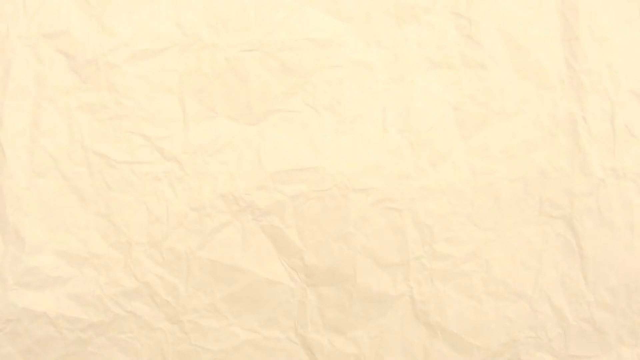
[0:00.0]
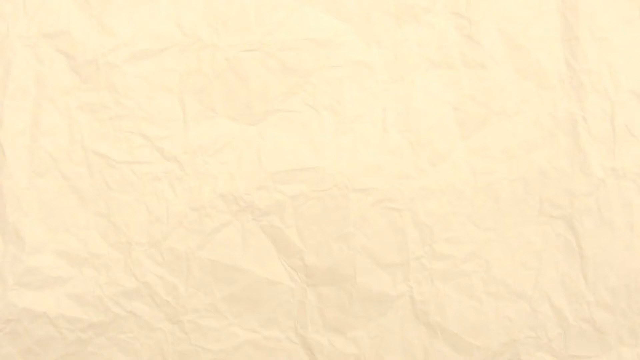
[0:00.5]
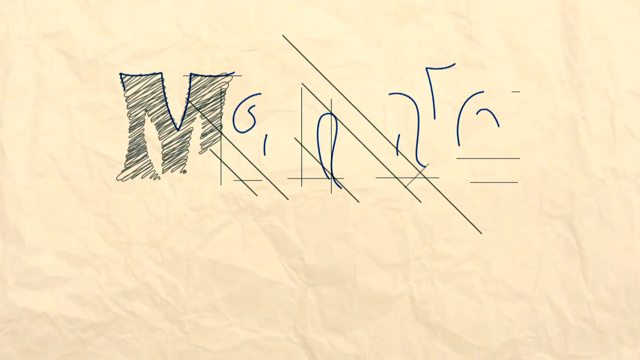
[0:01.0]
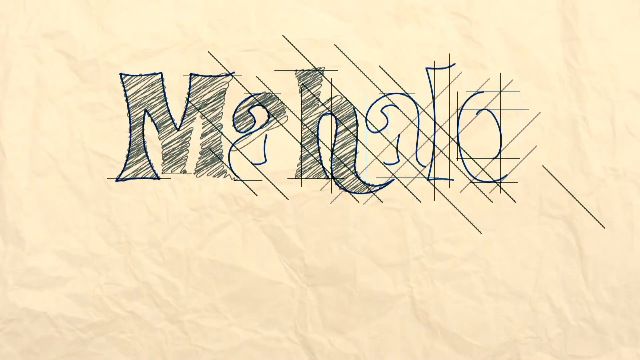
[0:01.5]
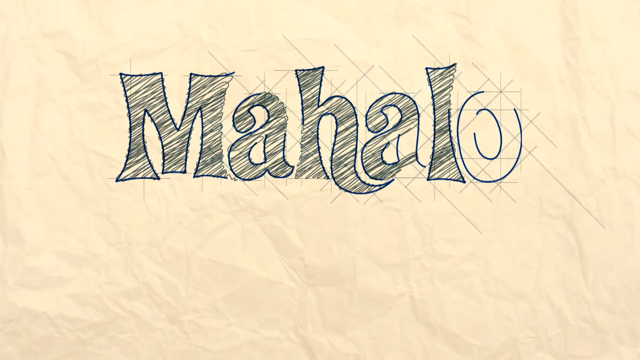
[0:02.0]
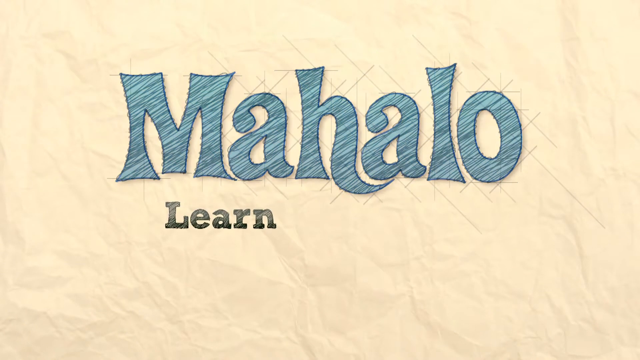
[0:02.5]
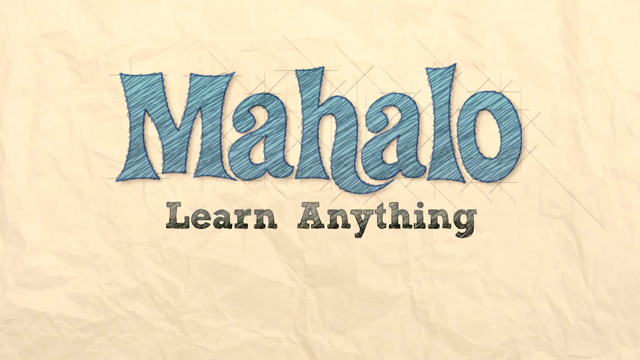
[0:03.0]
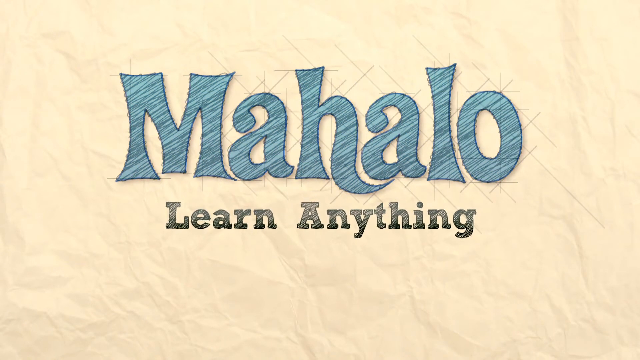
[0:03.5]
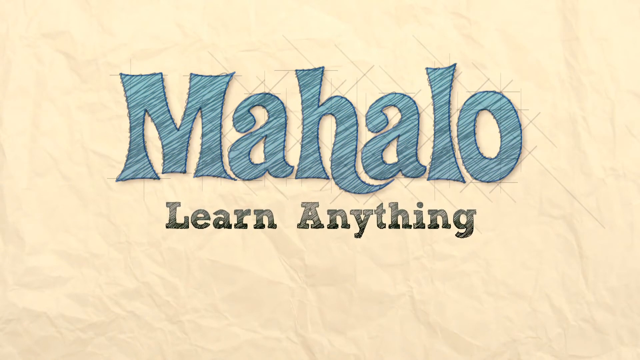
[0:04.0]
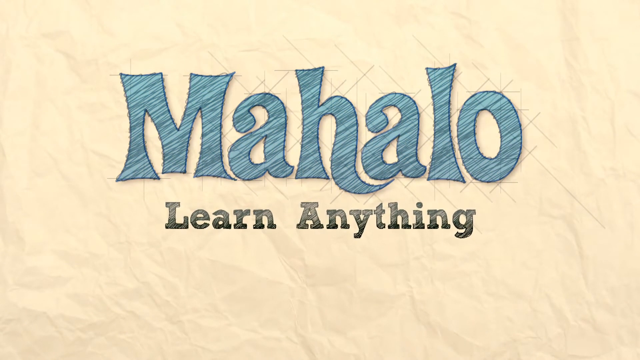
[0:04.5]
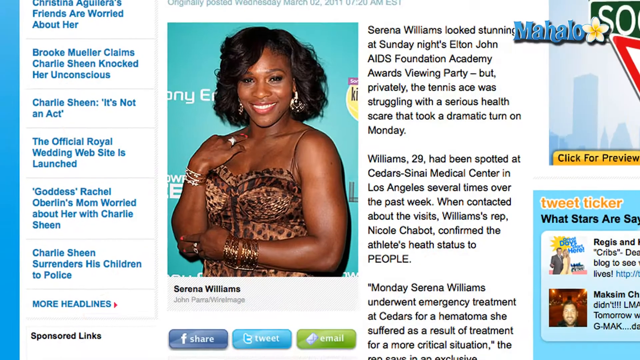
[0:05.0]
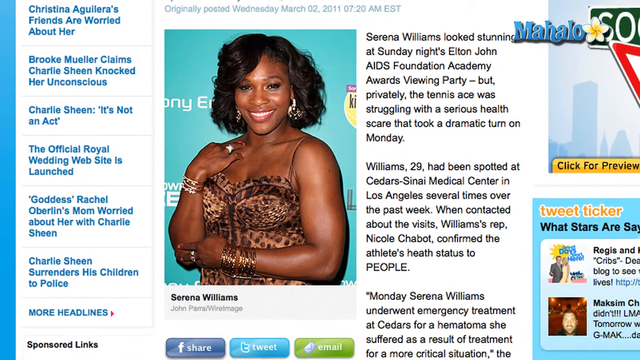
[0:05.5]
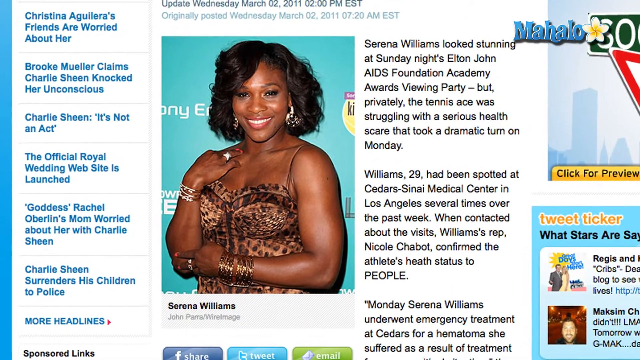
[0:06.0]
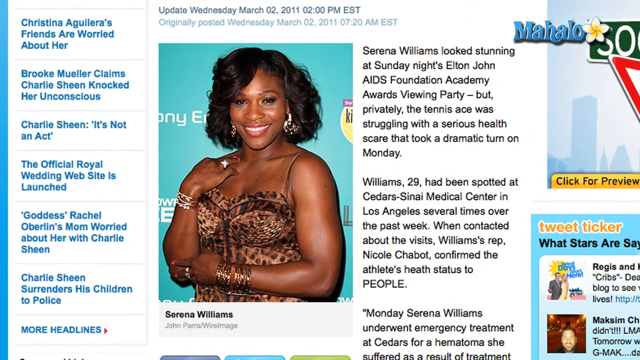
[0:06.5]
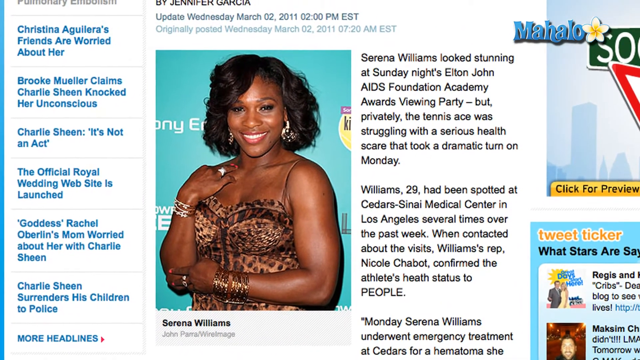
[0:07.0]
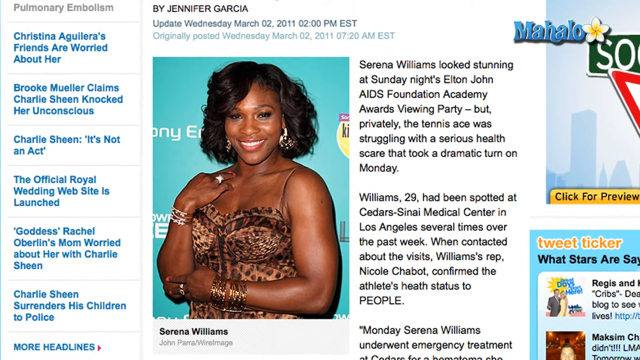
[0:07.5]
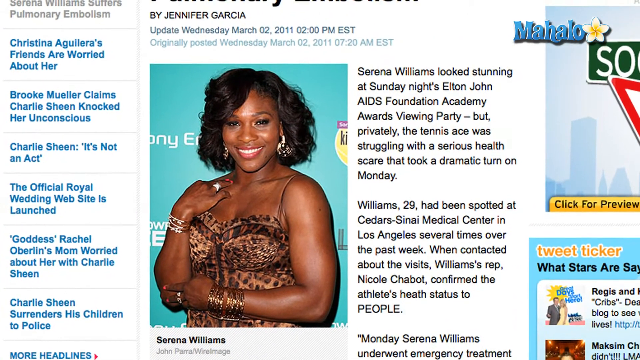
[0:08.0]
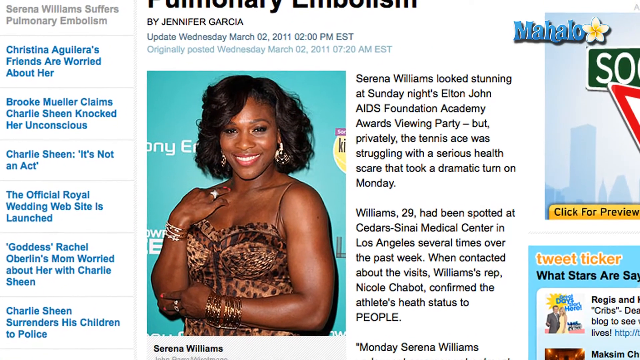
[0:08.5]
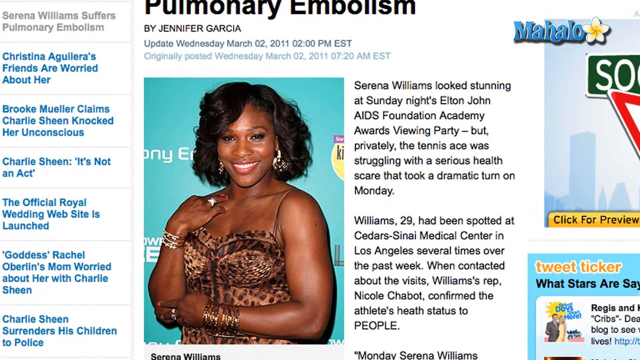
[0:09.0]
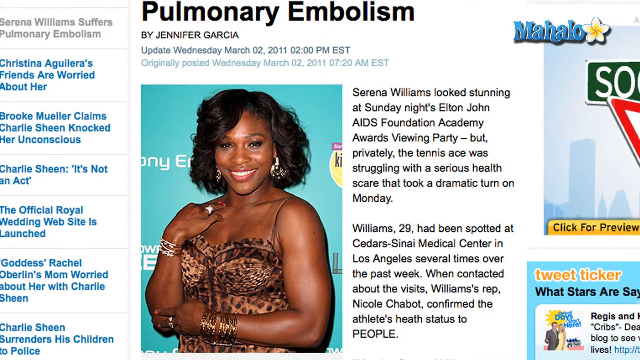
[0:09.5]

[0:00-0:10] A news article from Mahalo is displayed. Its title mentions "pulmonary embolism" and it is written by Jennifer Garcia. The update is dated Wednesday, March 2nd, 2011 at 2pm EST, originally posted earlier that same day. The article text reads: "Serena Williams looking stunning at Sunday night's Elton John AIDS Foundation Academy Awards Viewing Party. But privately, the tennis ace was struggling with a serious health scare that took a dramatic turn on Monday." It continues about the health scare: "Williams, 29 years old, had been spotted in Cedars-Sinai Medical Center in Los Angeles several times over the past weekend."